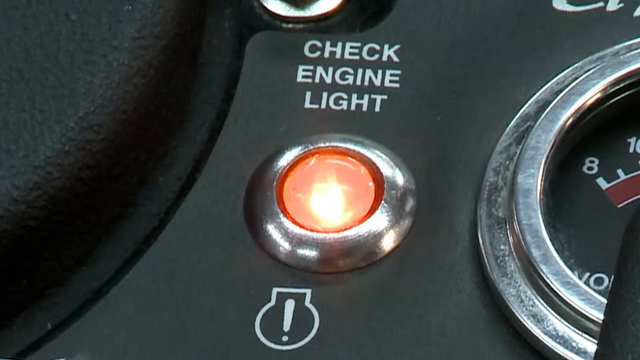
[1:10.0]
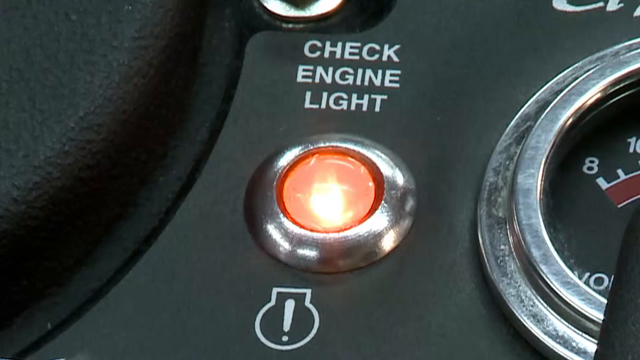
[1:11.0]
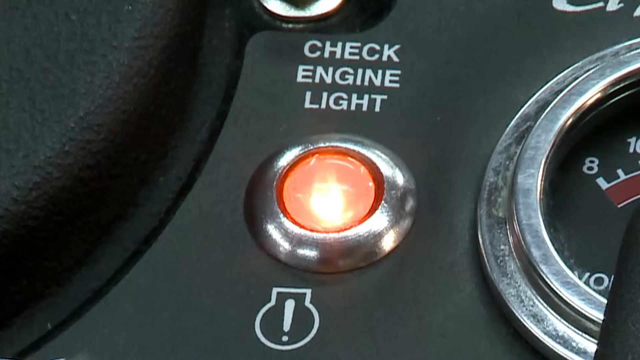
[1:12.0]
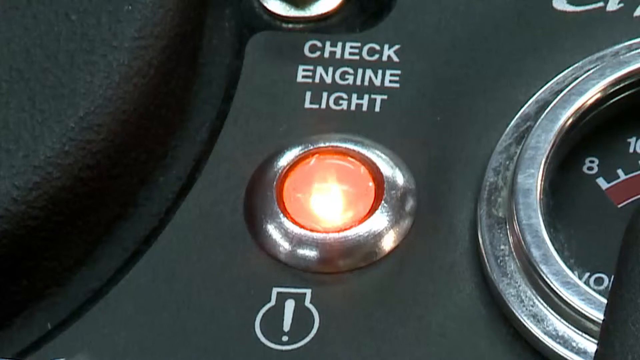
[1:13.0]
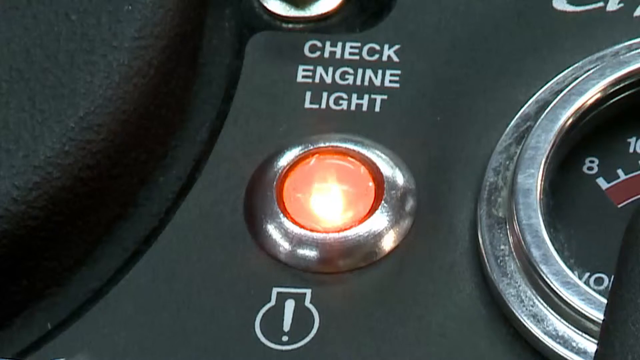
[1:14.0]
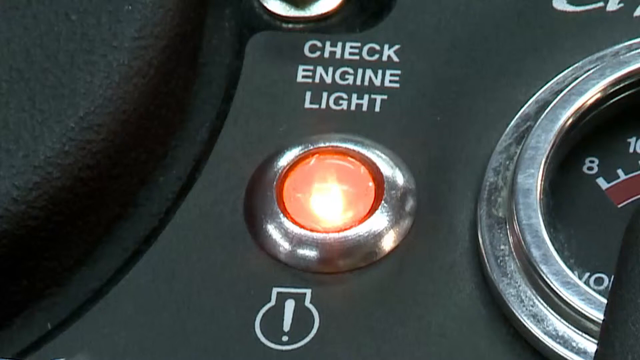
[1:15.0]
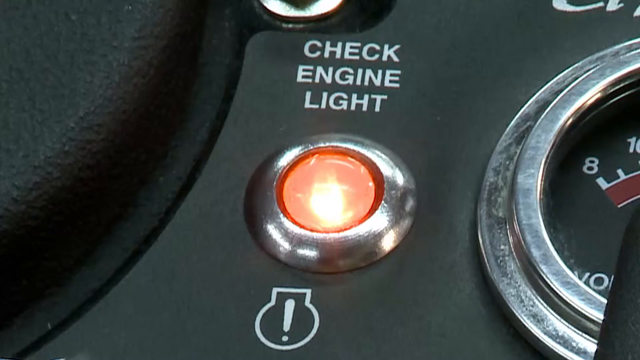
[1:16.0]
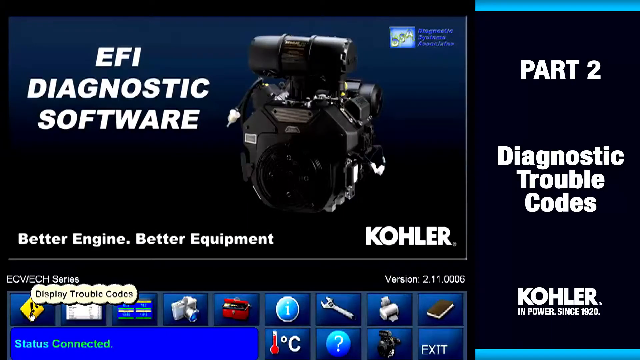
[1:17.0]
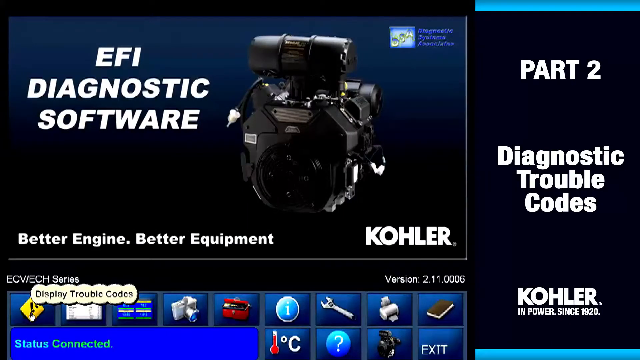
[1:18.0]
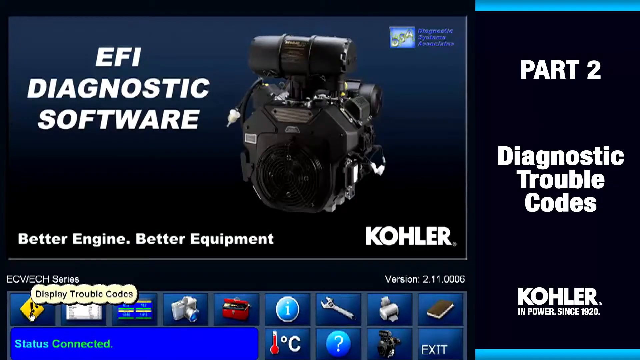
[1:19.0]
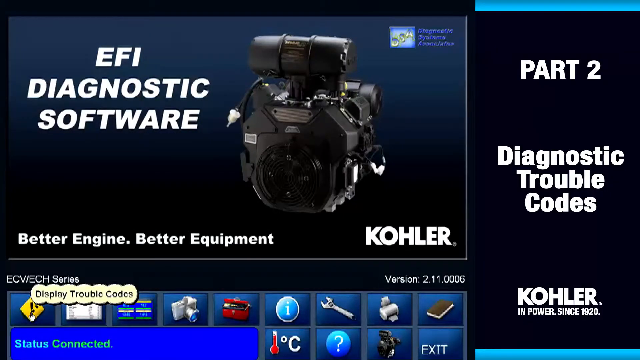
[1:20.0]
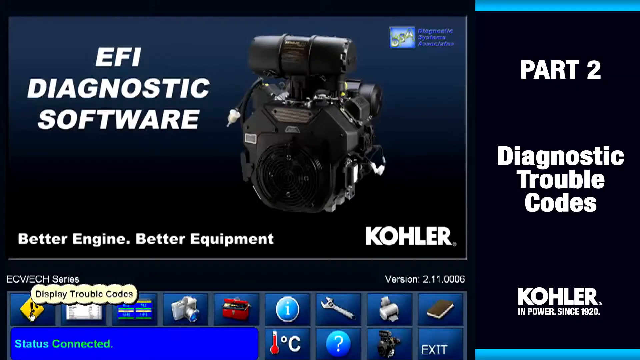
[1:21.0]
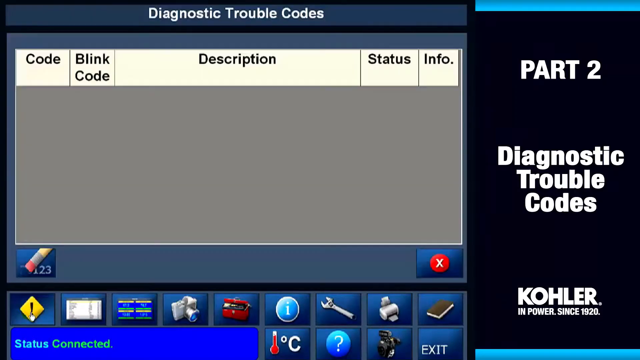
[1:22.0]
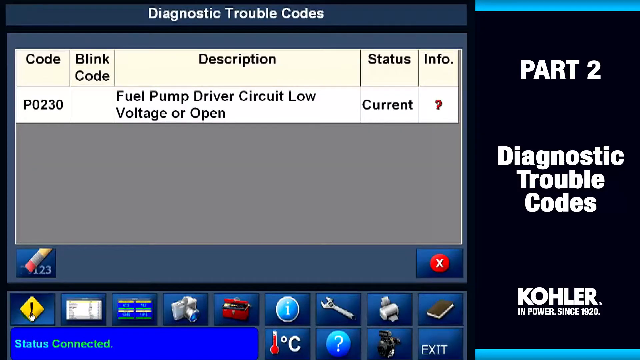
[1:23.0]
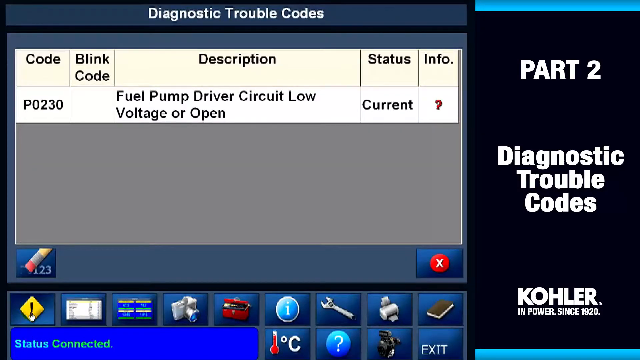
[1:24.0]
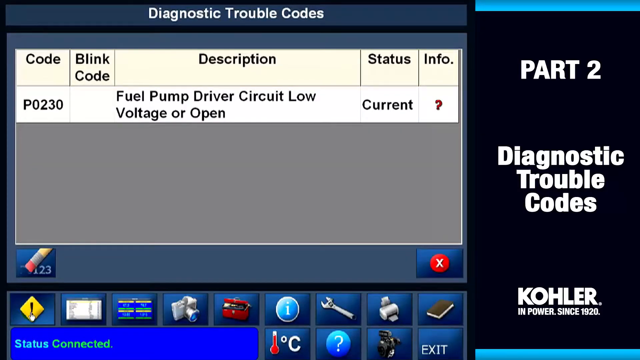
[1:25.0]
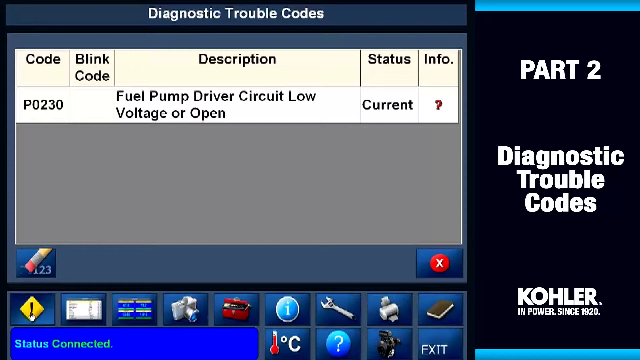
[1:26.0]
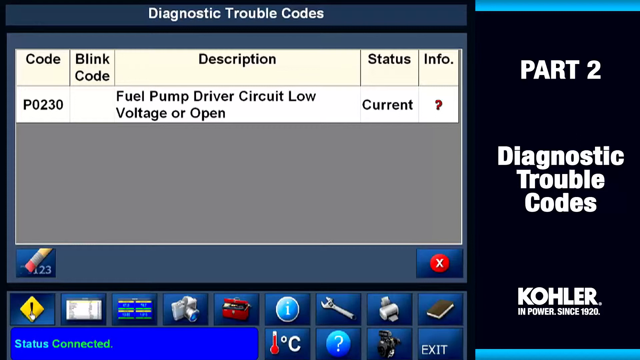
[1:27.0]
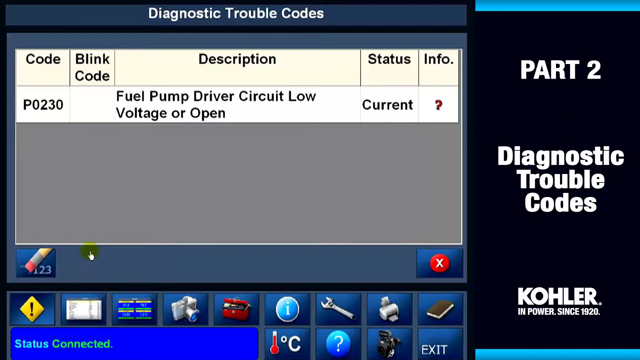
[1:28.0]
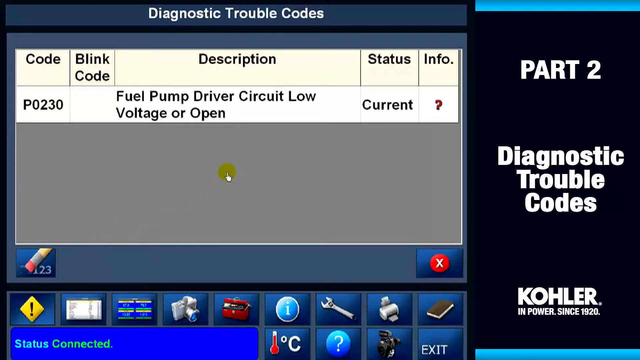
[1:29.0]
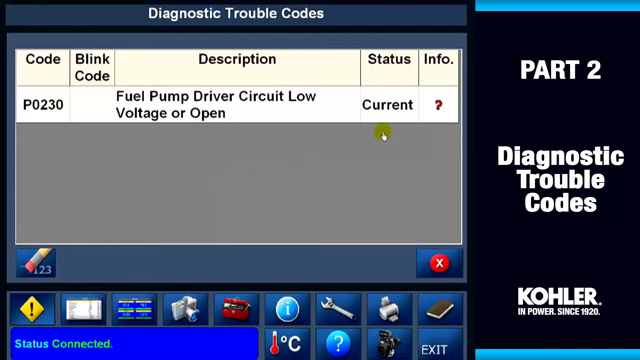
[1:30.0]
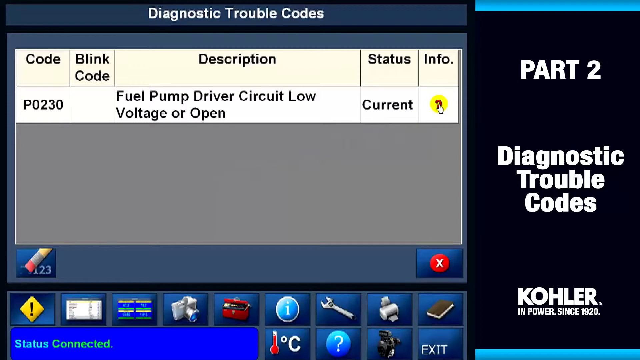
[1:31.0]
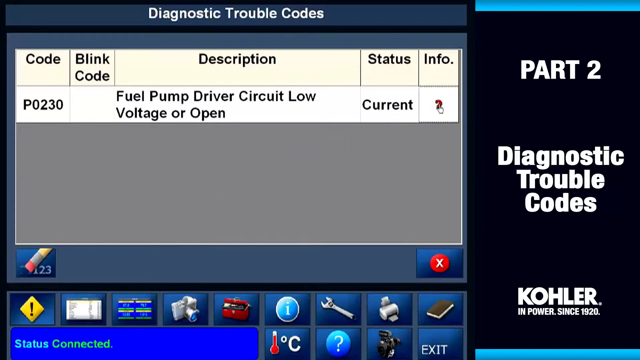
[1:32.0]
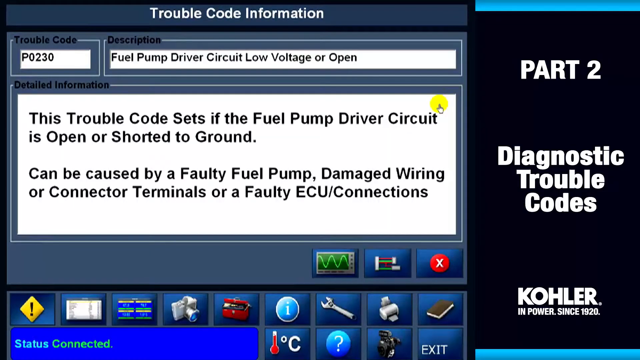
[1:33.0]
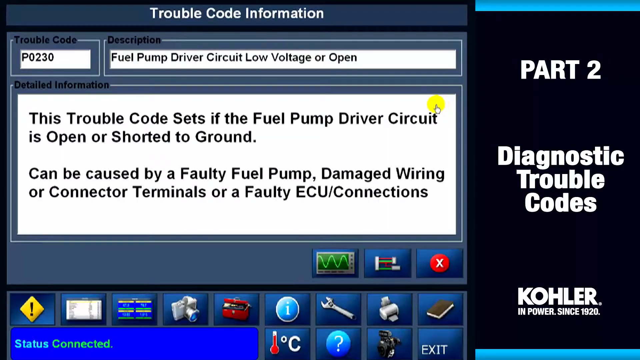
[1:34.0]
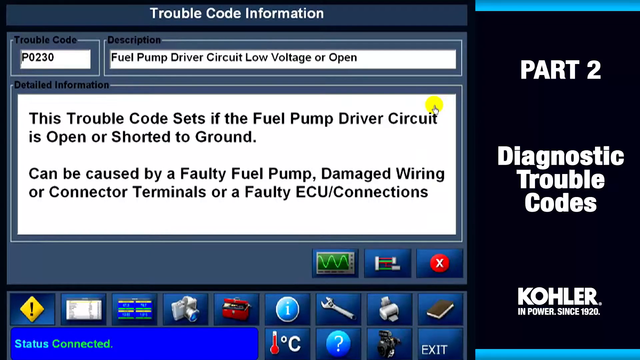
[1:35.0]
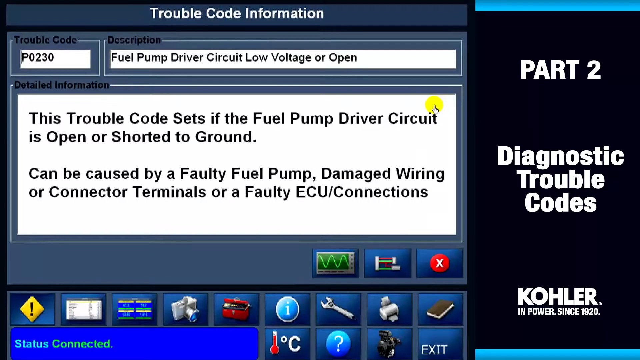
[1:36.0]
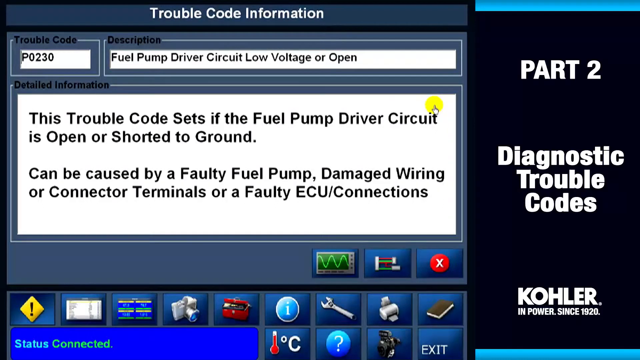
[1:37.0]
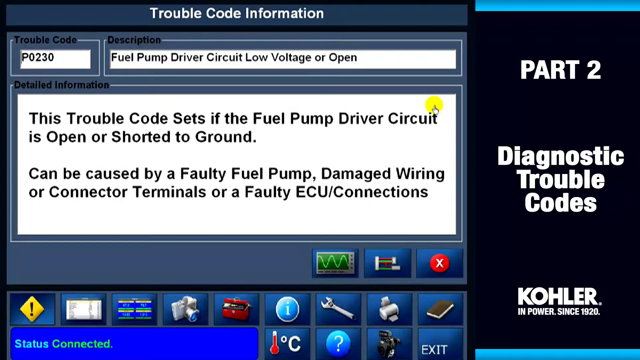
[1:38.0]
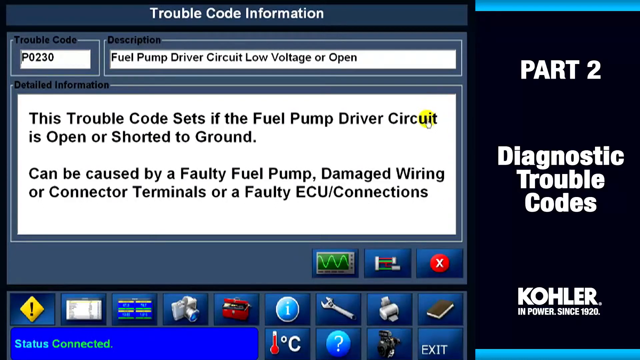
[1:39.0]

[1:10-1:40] A vehicle dashboard is shown with the check engine light on: a glowing circle with the text "check engine" and the check engine symbol underneath the circle. The view then goes to a screen reading "EFI diagnostic software, better engine, better equipment" and "Kohler". The trouble codes screen reads "Diagnostic trouble codes", code "P0230", "Fuel pump driver circuit low voltage or open", "Status current" and "Info" with a question mark icon. A cursor moves in the middle of the screen onto the question mark icon and apparently clicks it. Text appears reading "This trouble code sets if the fuel pump driver circuit is open or shorted to the ground, can be caused by a faulty fuel pump, damage, wiring, or connector terminals, or a faulty ECU connections."